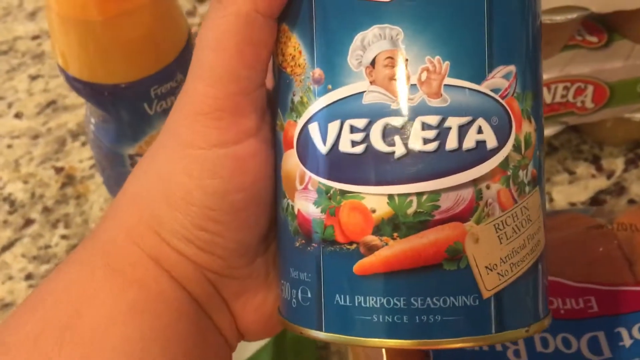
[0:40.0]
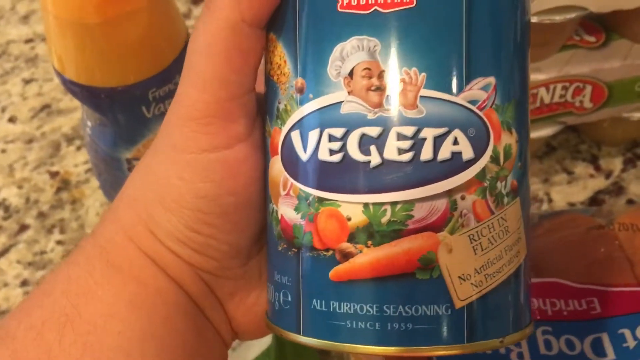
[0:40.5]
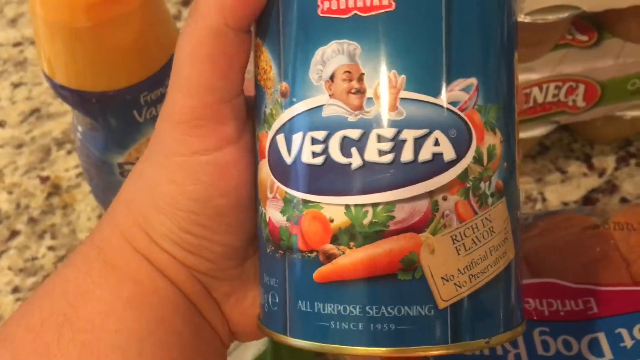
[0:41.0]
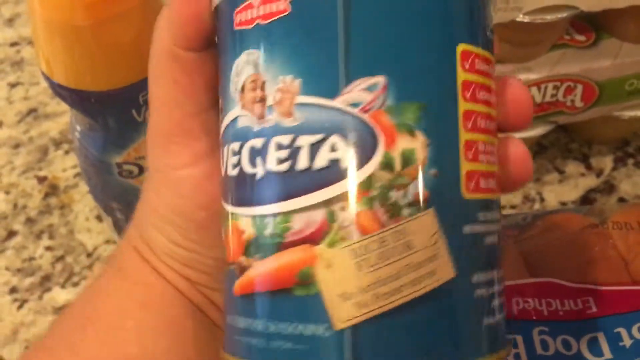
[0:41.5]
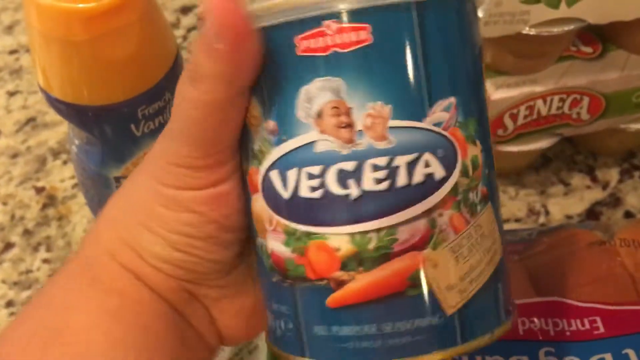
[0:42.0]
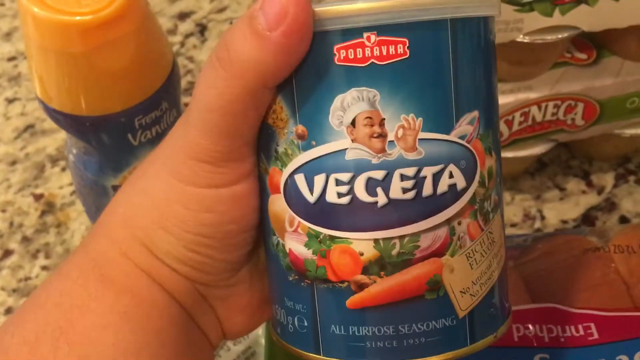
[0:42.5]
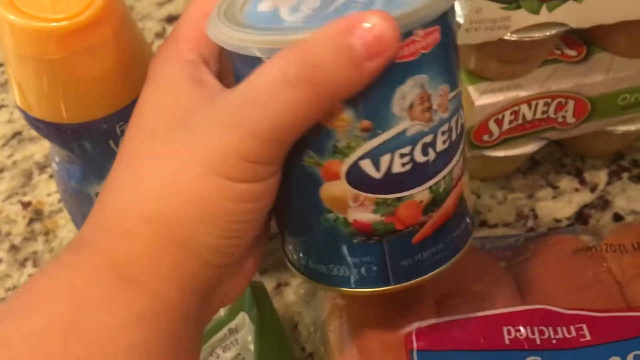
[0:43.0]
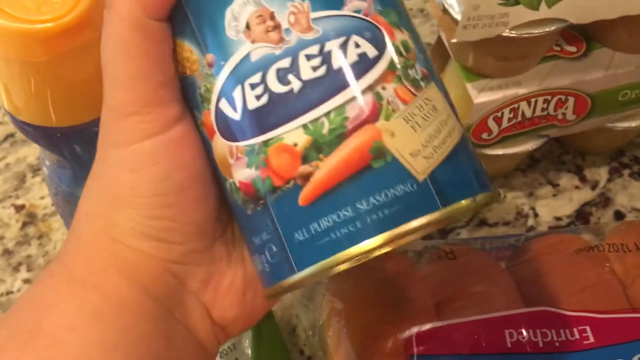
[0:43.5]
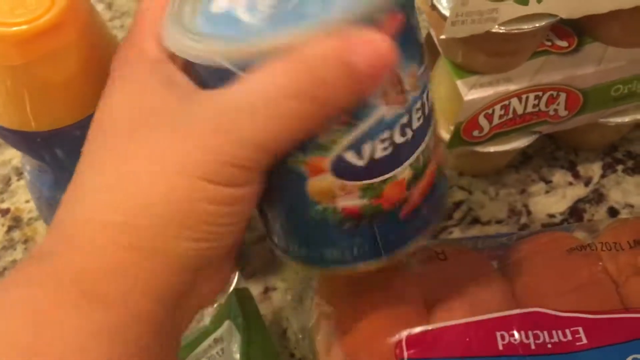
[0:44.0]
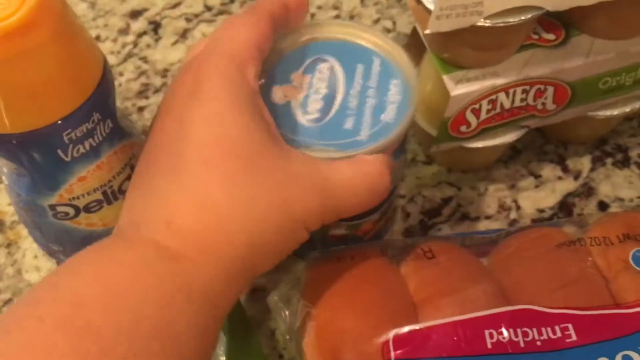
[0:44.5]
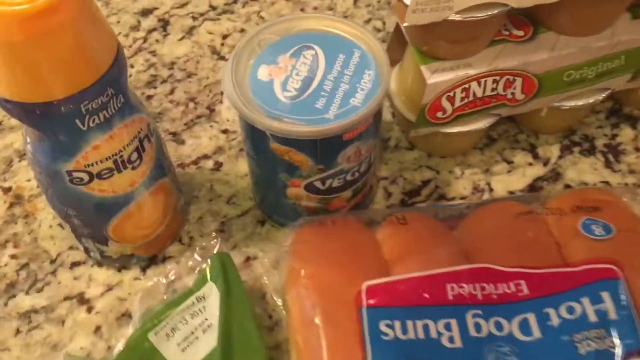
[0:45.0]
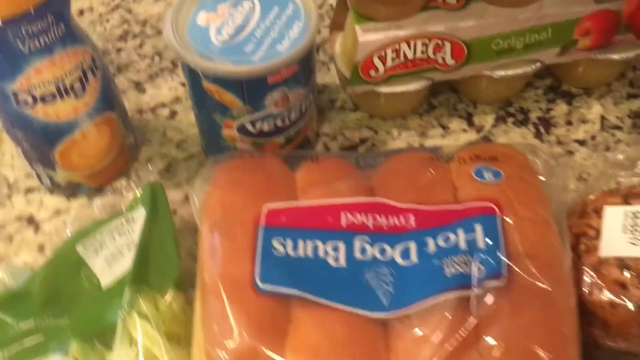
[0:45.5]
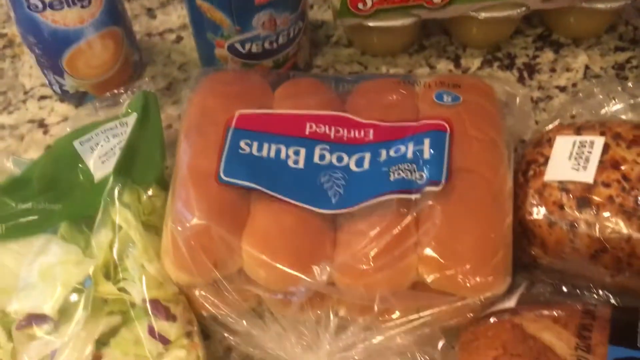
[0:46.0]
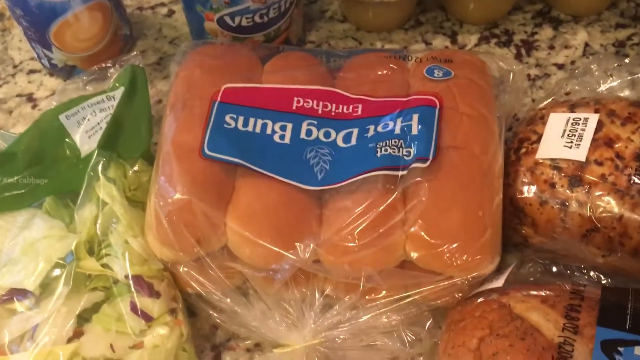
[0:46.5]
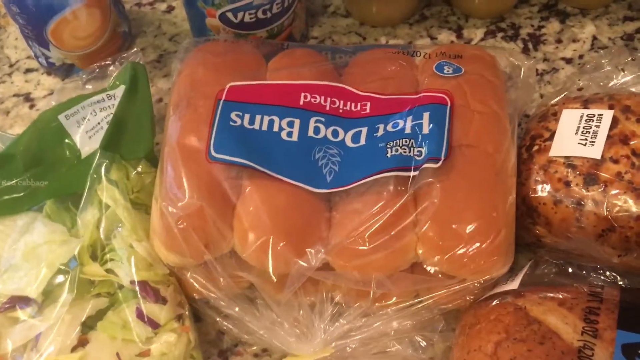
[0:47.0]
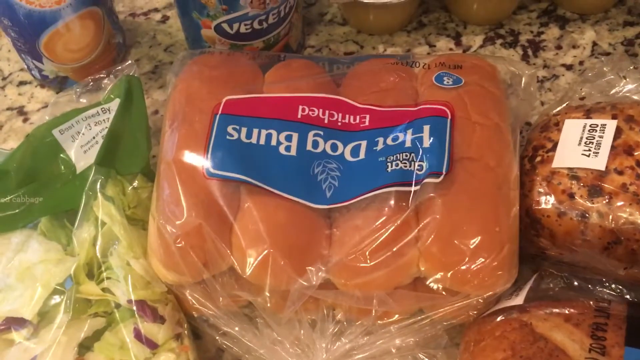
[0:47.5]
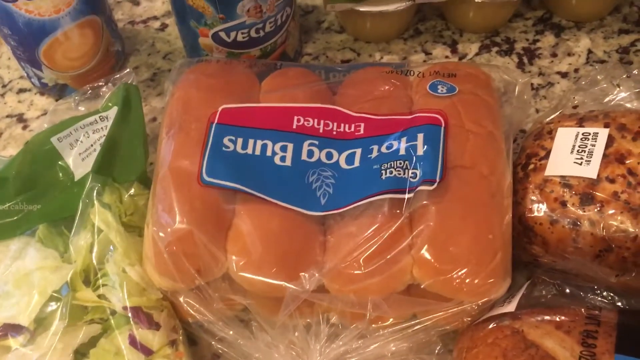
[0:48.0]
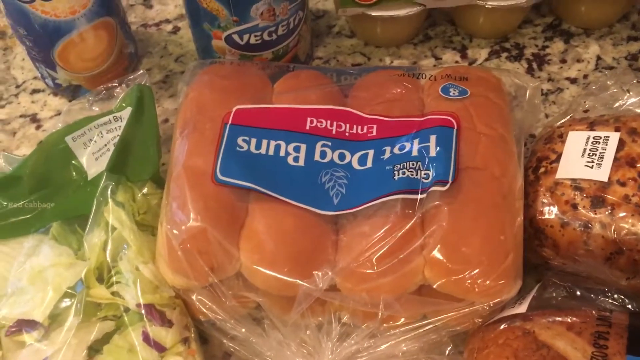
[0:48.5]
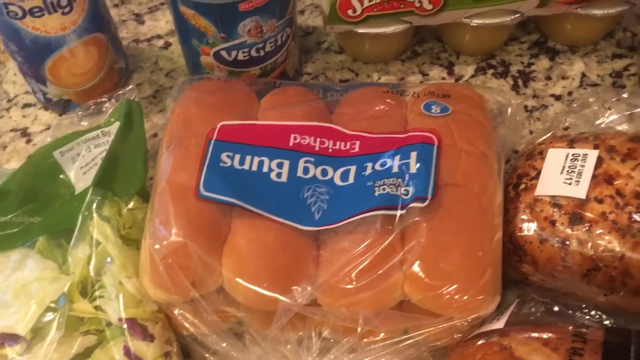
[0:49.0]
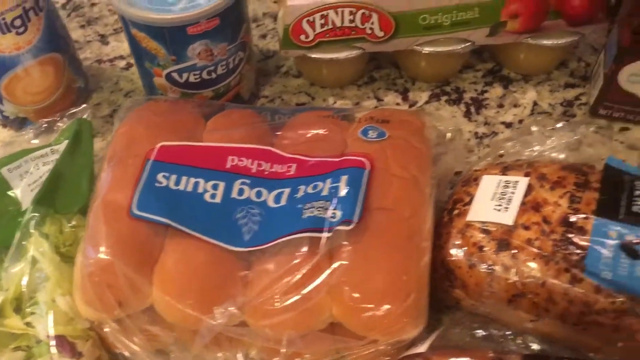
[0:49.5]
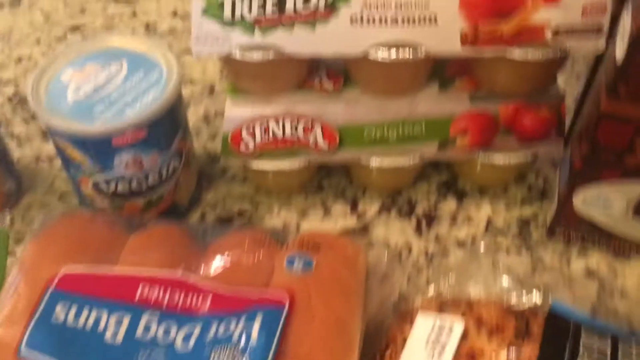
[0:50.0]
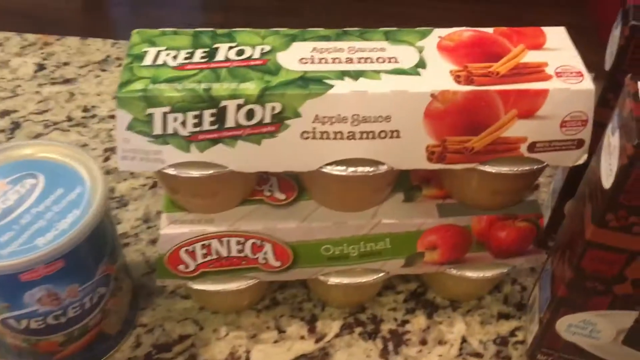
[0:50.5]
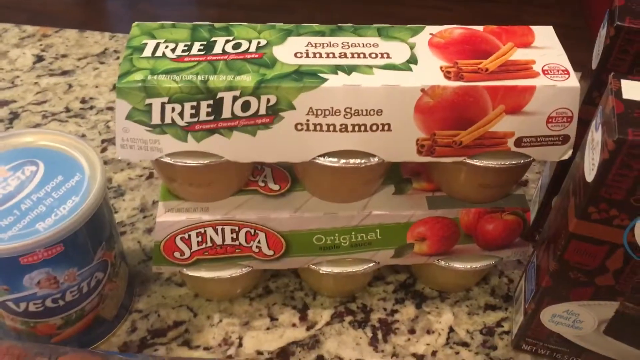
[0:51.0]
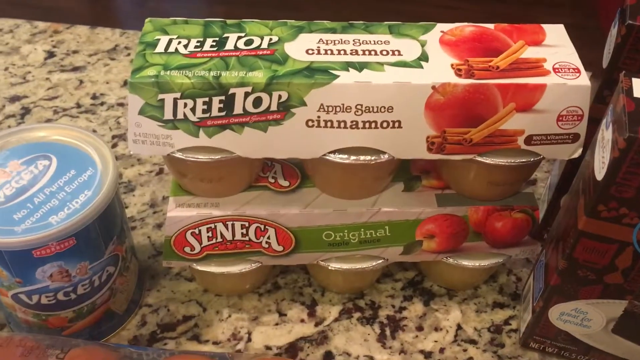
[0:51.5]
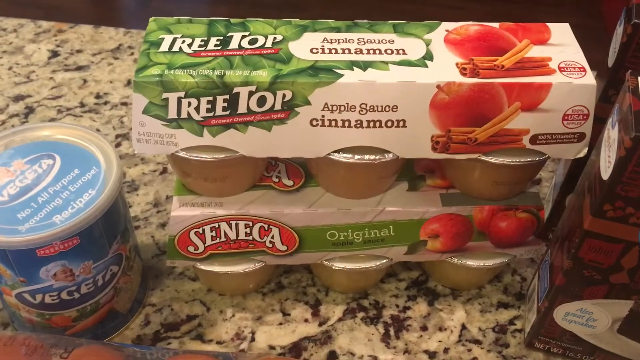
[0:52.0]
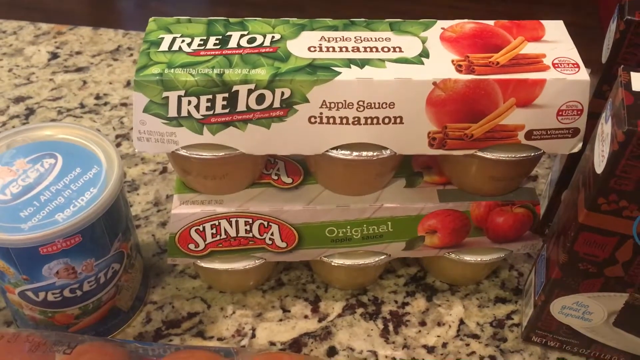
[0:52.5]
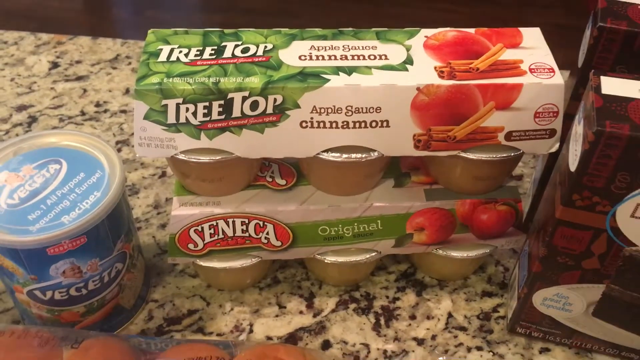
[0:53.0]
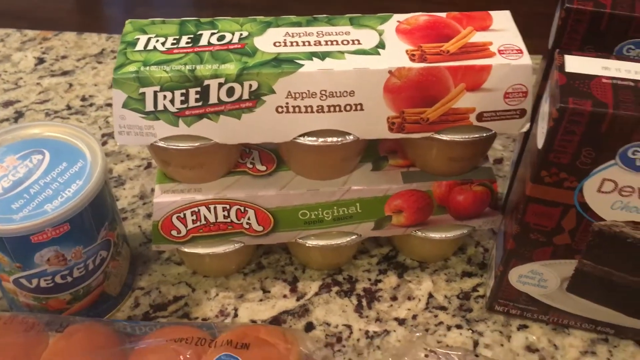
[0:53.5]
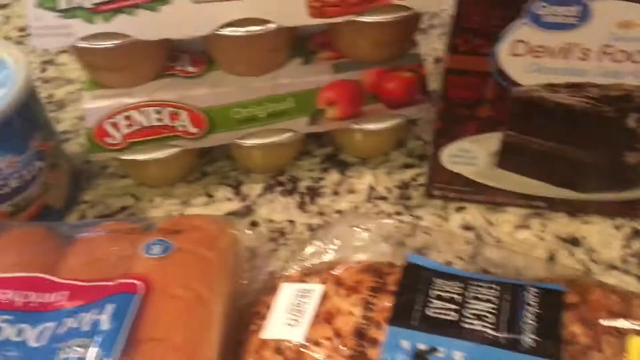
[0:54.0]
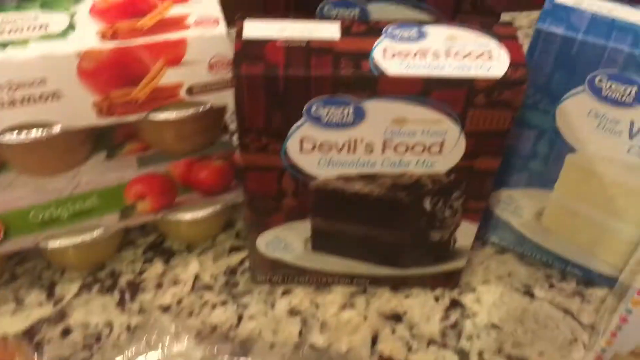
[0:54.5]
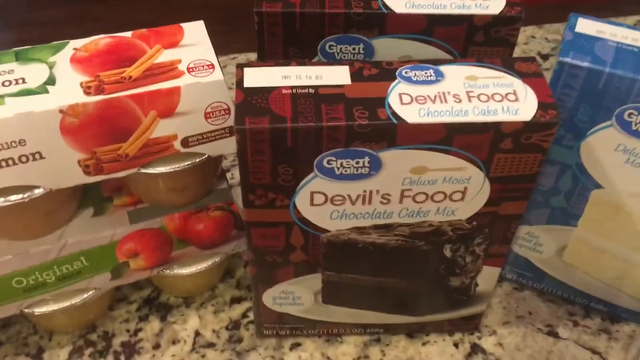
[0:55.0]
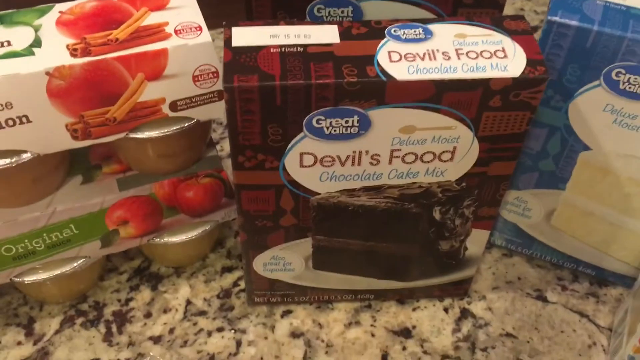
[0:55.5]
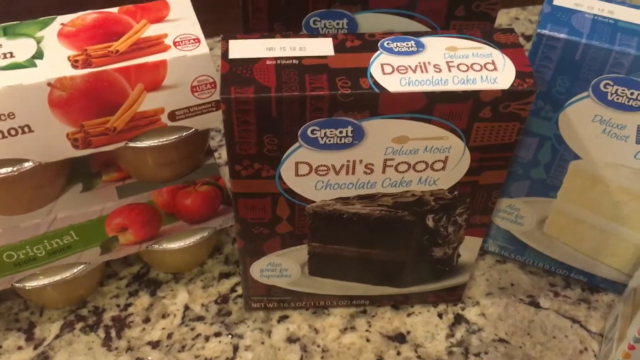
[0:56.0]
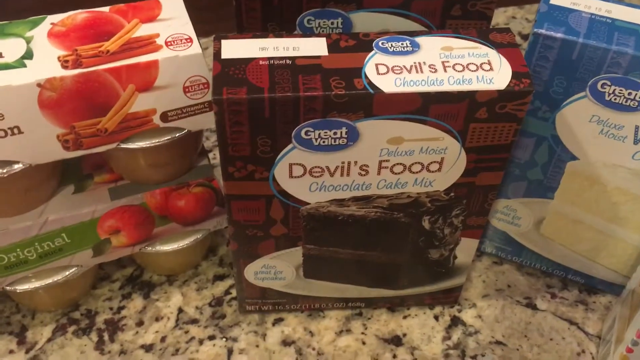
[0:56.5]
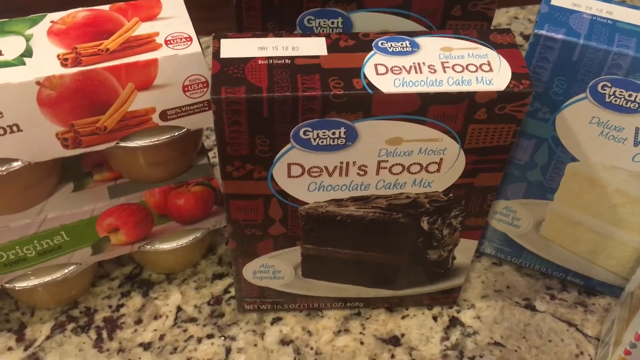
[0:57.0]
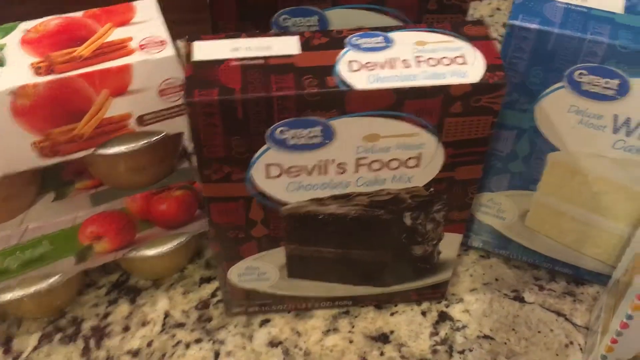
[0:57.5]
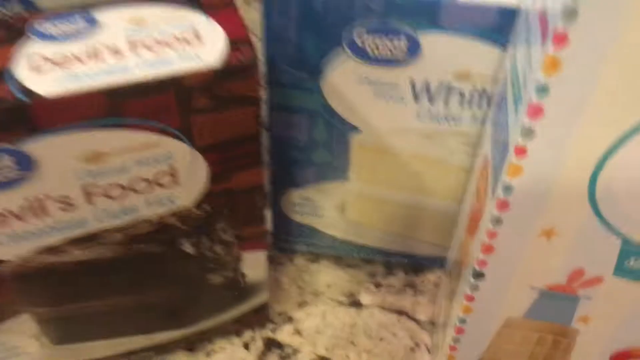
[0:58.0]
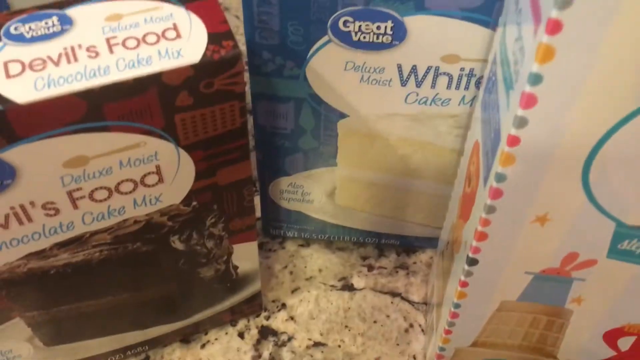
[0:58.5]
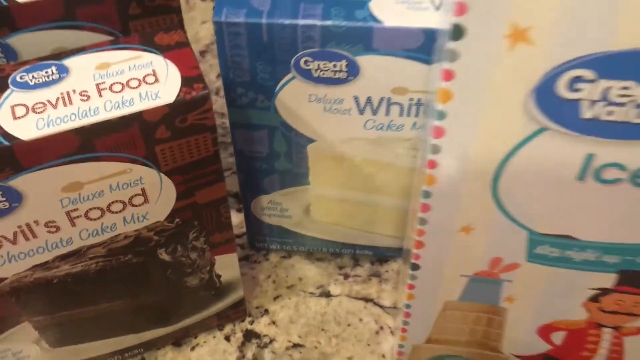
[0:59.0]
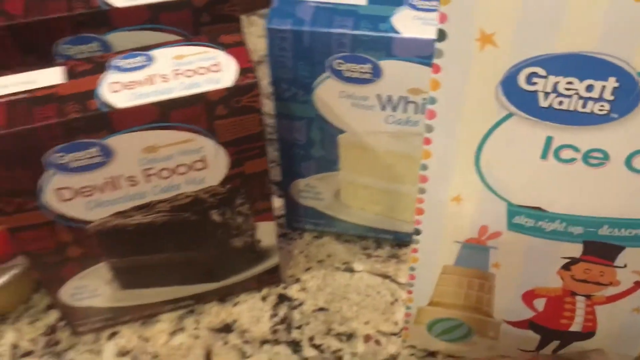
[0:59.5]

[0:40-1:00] The grocery haul, purchased from Walmart, continues with a blue and white can of Vegeta, seemingly some sort of soup; at the bottom it says "all-purpose seasoning" and "rich in flavour". Next is a pack of Great Value hot dog buns titled "Enriched": an eight-pack in a transparent bag with a pink, blue and white logo. Two six-packs of applesauce follow in white and green packaging; the one at the top is Tree Top applesauce cinnamon, and the one at the bottom is the original flavour. Two boxes of devil's food say "chocolate cake deluxe moist"; the packaging is red and brown with a white and blue logo, and the front shows a picture of a thick, moist chocolate cake. Another box of cake mix, blue and white, is for a vanilla cake and has a thick slice of vanilla cake on the front.